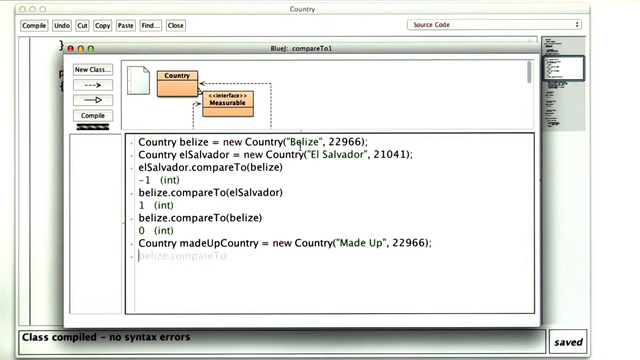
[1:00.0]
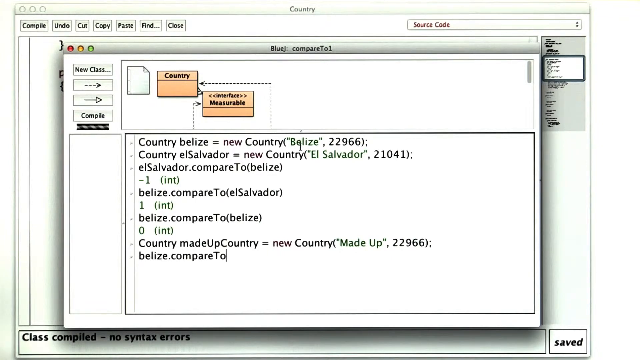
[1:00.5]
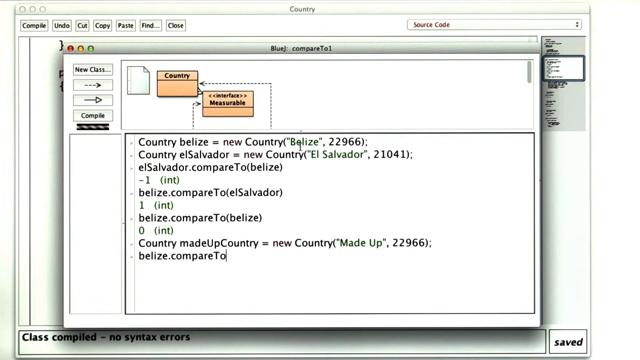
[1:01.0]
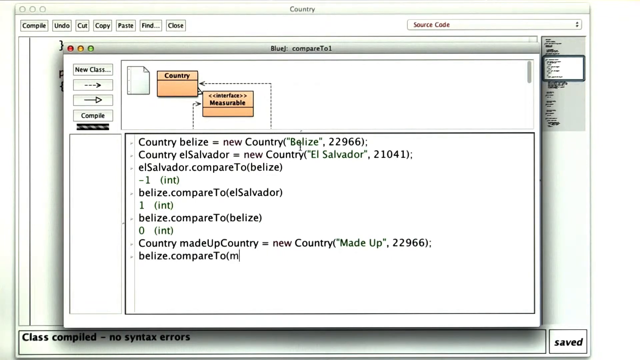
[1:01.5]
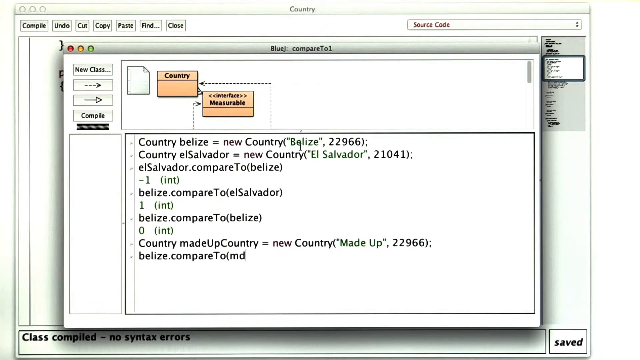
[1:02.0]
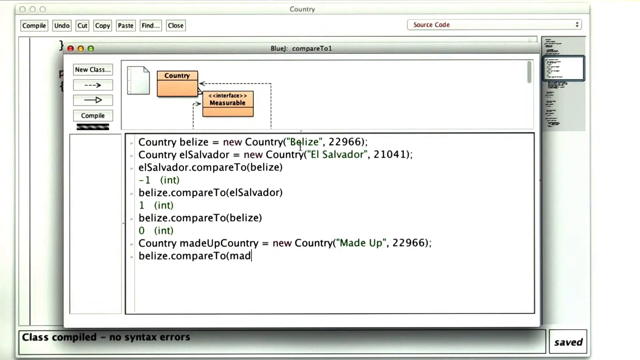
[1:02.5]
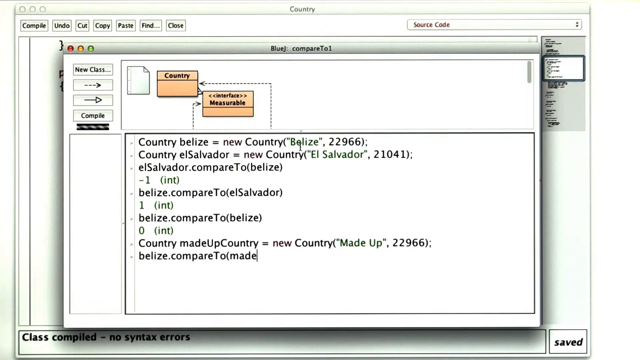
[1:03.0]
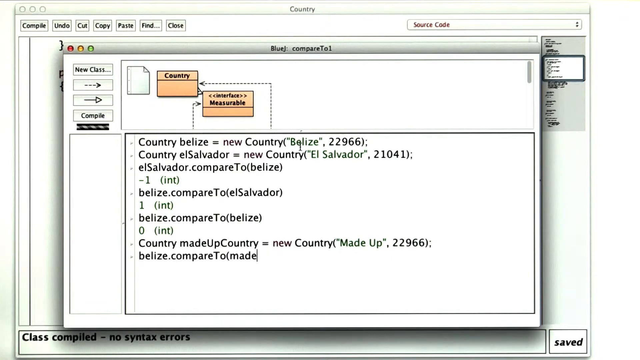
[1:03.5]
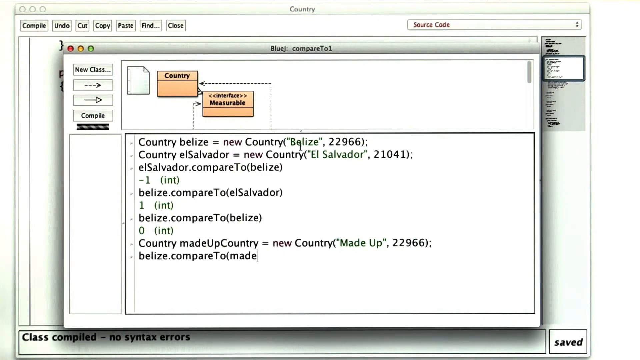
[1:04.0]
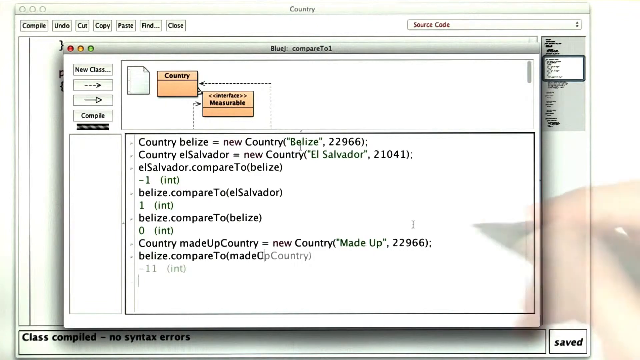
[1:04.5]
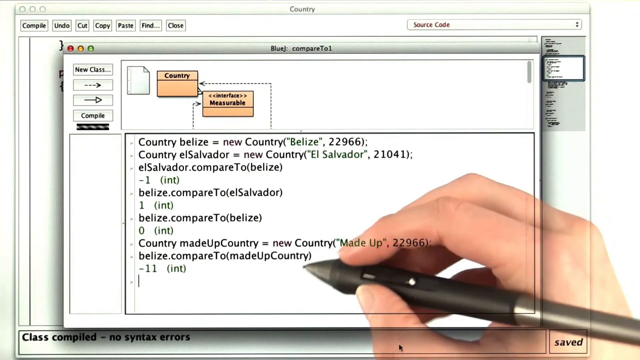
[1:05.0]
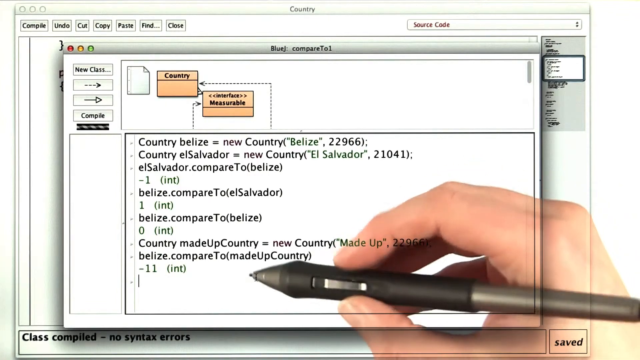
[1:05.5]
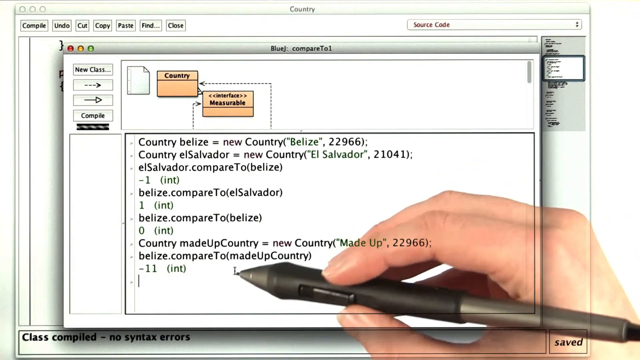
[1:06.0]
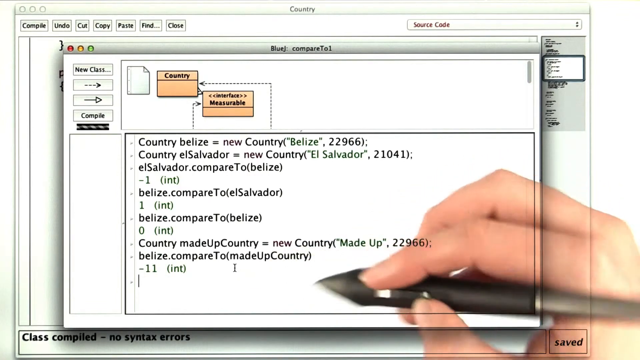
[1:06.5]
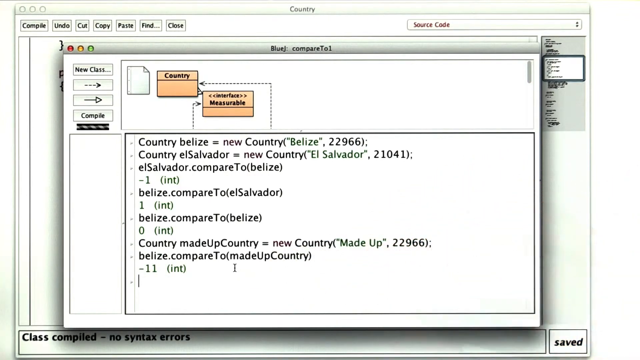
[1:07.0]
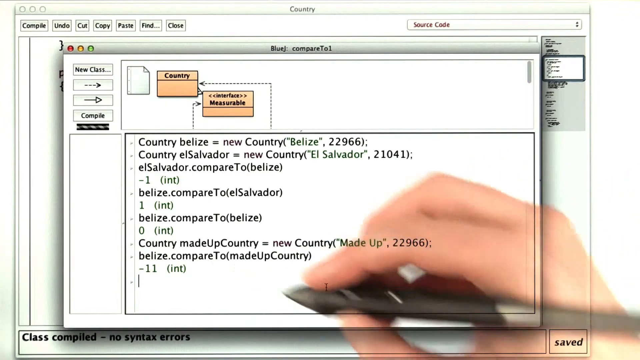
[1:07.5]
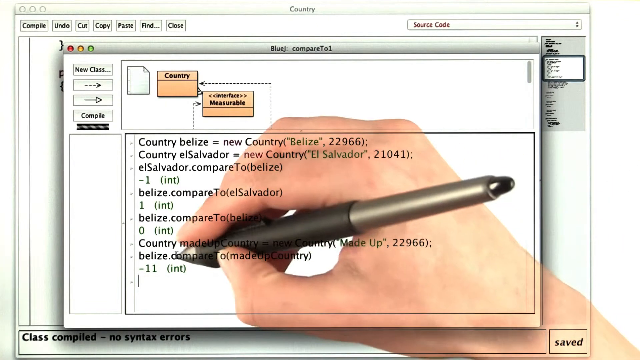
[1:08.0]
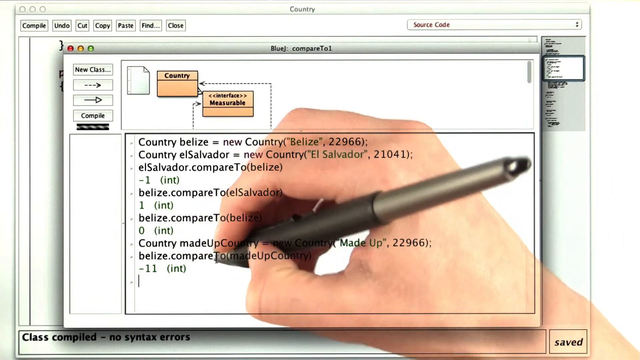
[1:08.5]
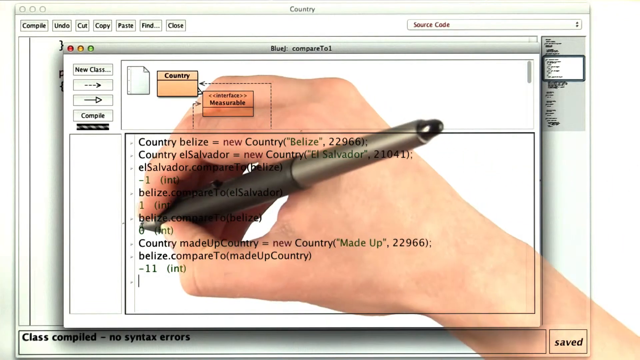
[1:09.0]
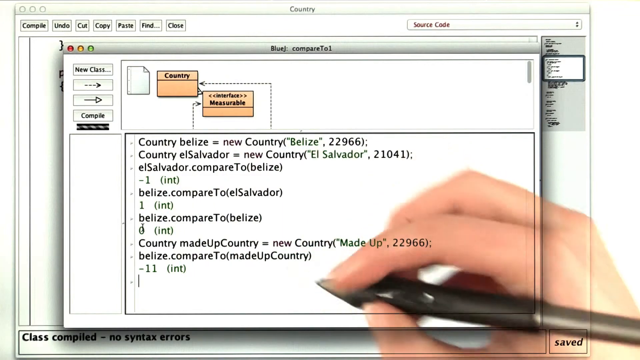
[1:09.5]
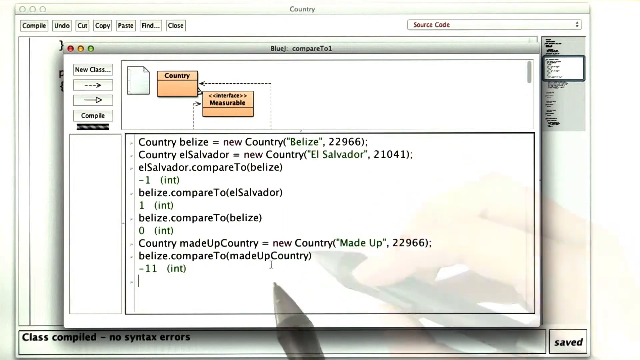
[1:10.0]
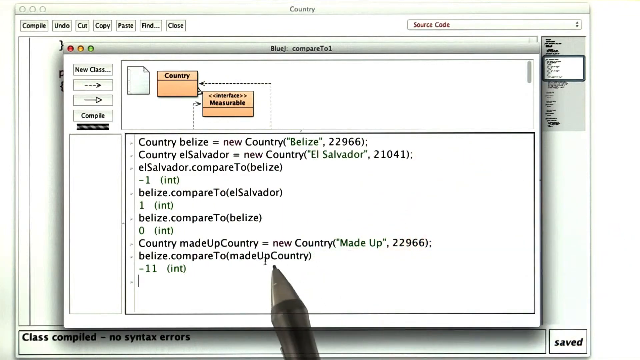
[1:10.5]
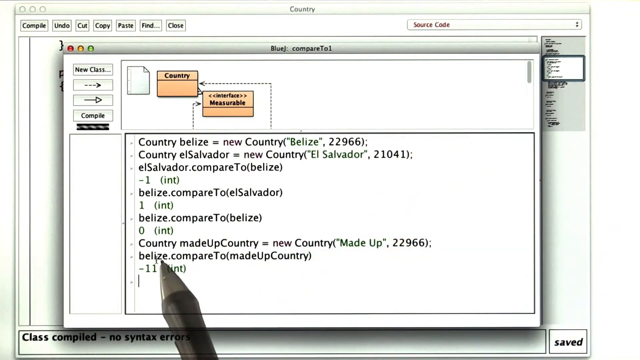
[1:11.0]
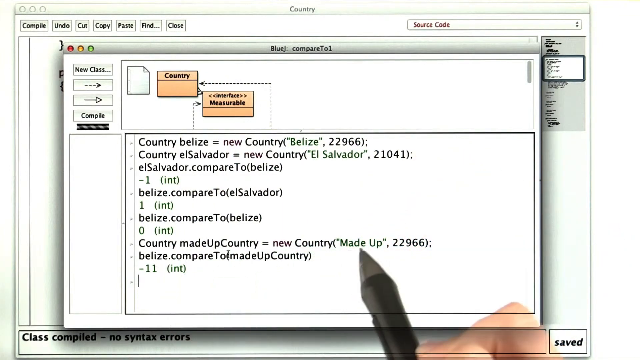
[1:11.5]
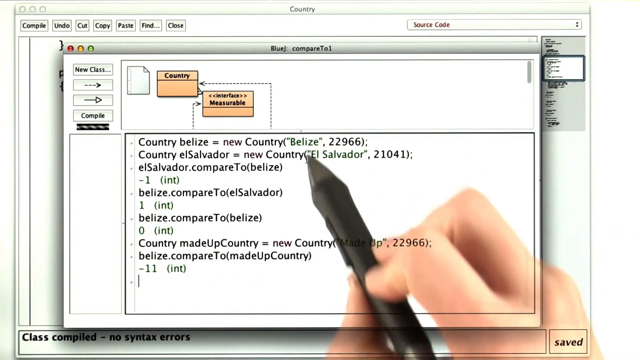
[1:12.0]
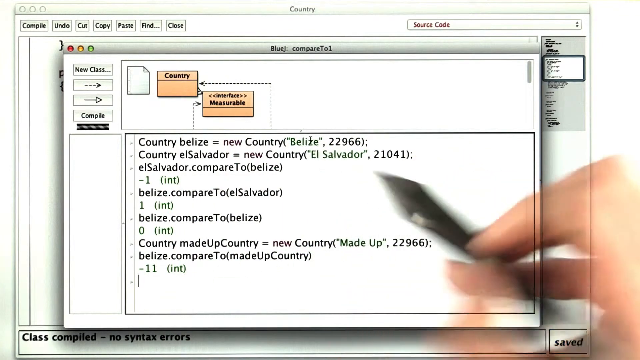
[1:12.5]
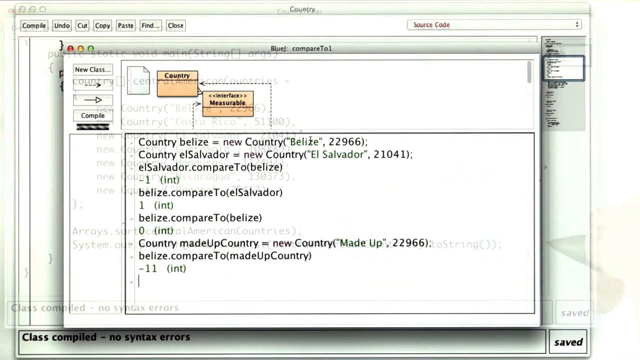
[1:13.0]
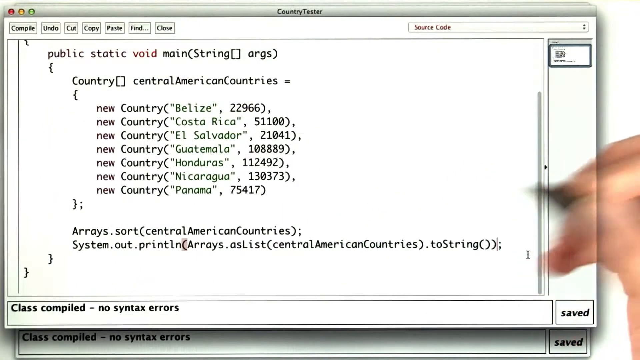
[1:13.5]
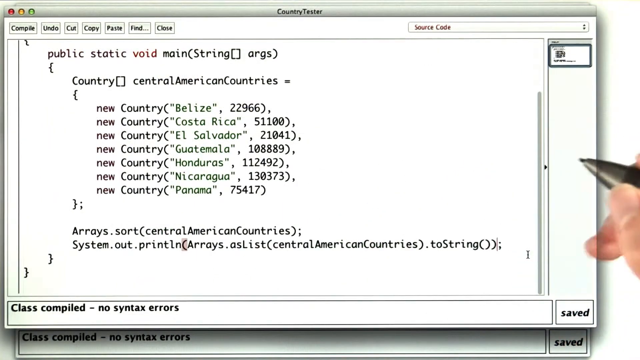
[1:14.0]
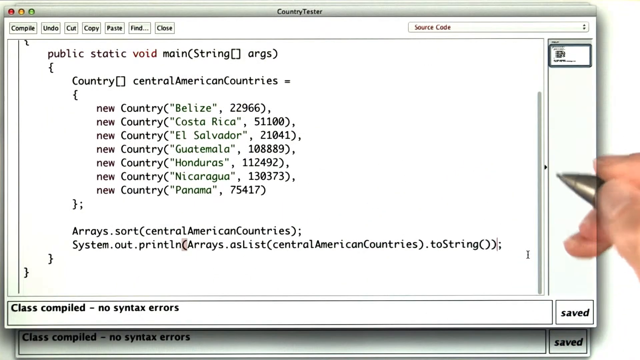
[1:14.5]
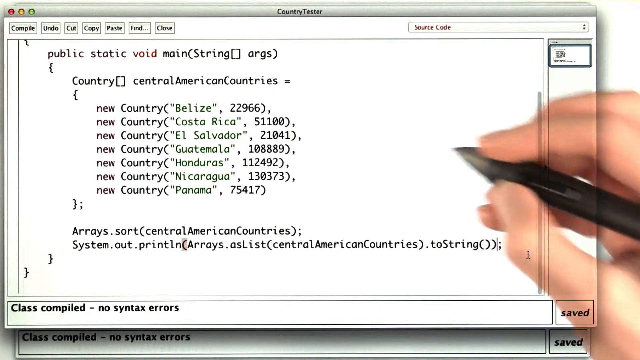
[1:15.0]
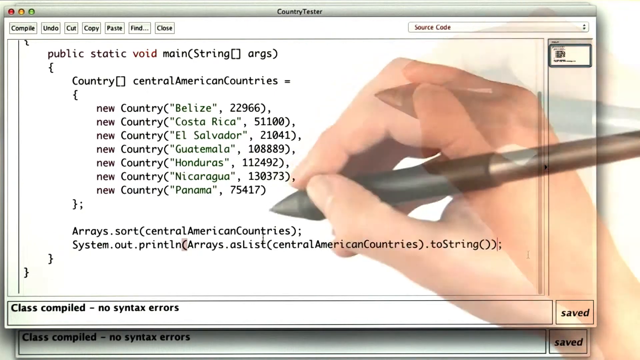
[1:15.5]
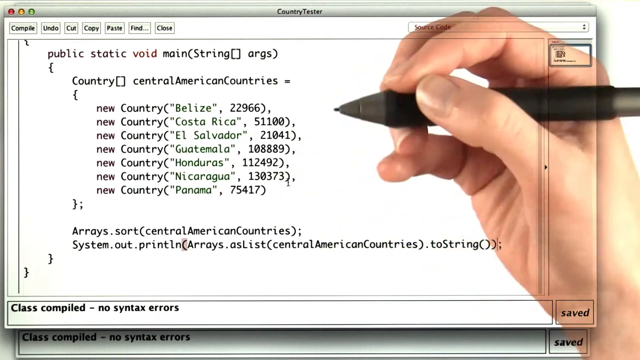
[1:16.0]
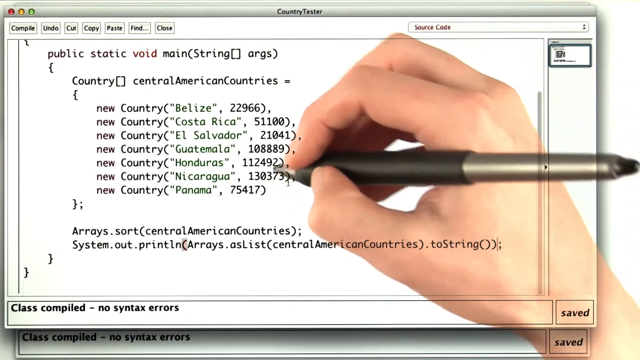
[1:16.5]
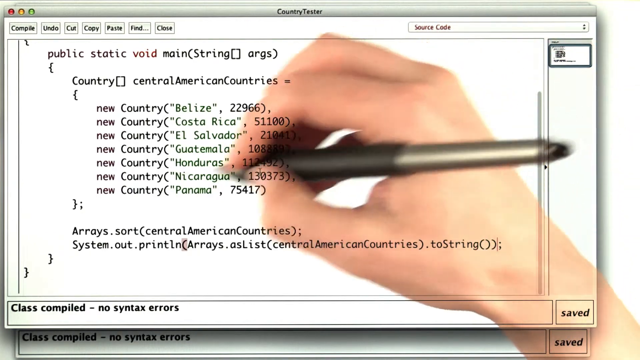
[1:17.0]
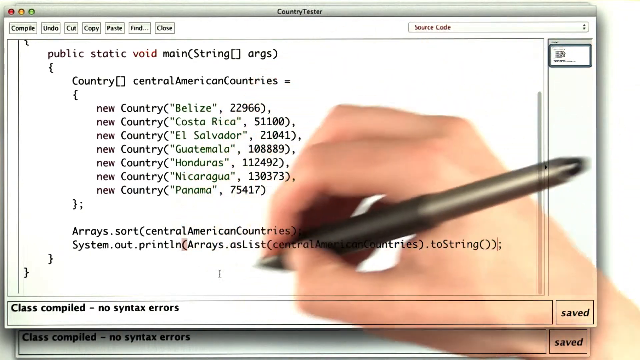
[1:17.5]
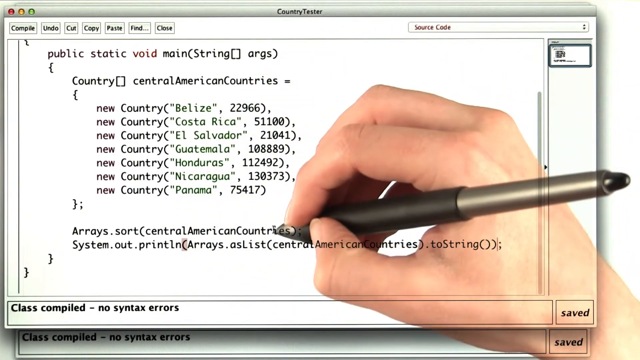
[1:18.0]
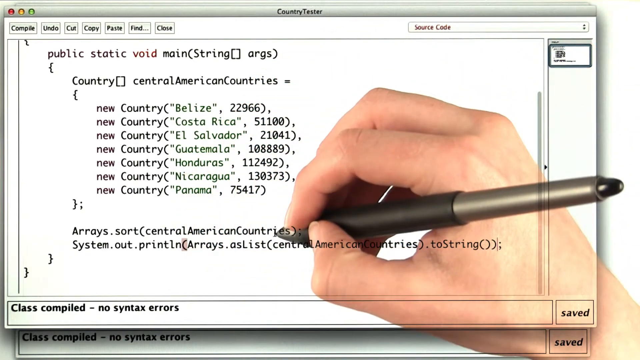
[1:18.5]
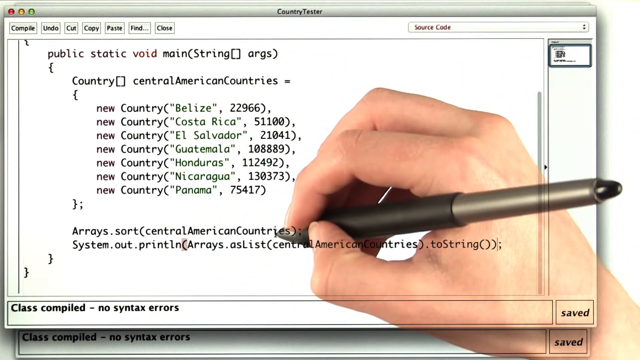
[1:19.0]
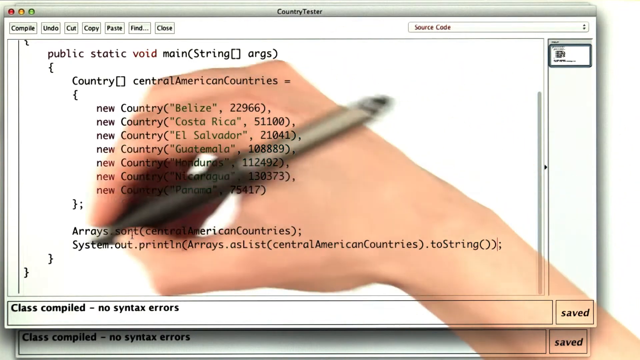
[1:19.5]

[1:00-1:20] The person adds more countries to the code, seemingly building a bigger data pool and apparently making a comparison between beliefs. El Salvador appears, and the person is kind of sorting the Central American countries. The person's hand goes in and out of the shot; it is a right hand, Caucasian, looks very male, and uses the pen. Nothing else about the person is visible, only the code, the hand and the pen. They seem to be using a coding tool based on countries, apparently on an Apple Mac.